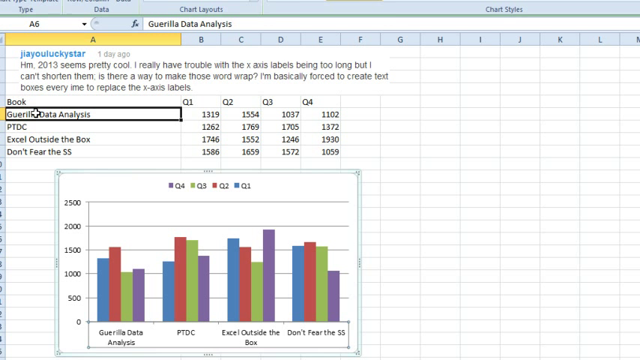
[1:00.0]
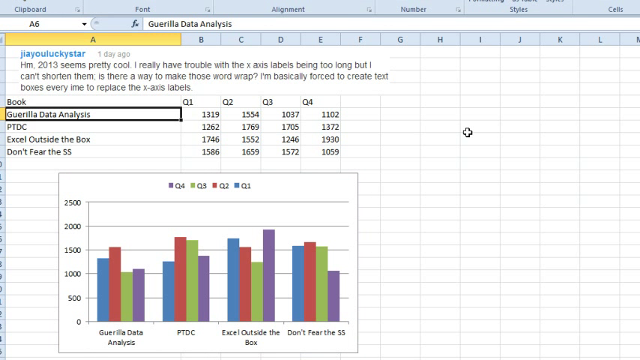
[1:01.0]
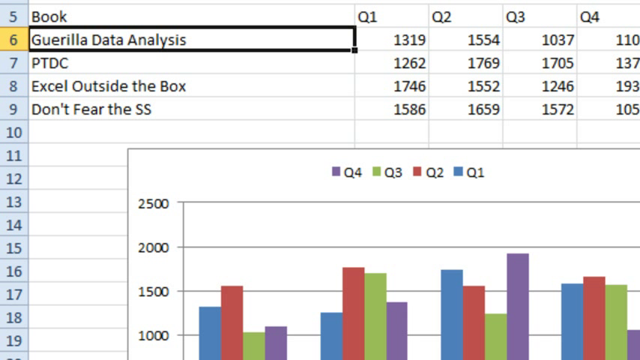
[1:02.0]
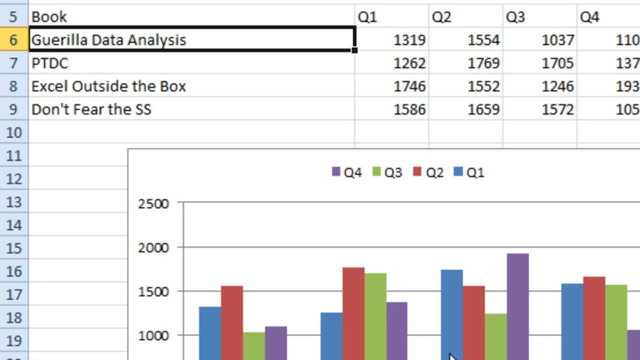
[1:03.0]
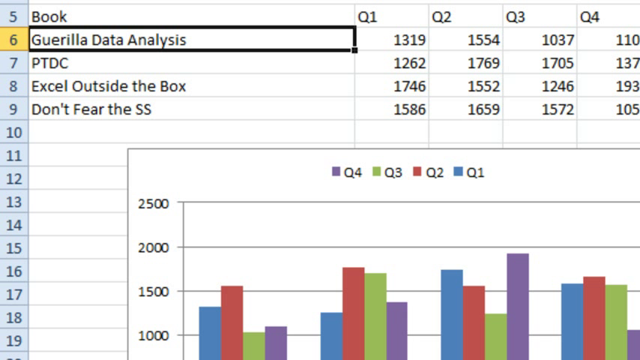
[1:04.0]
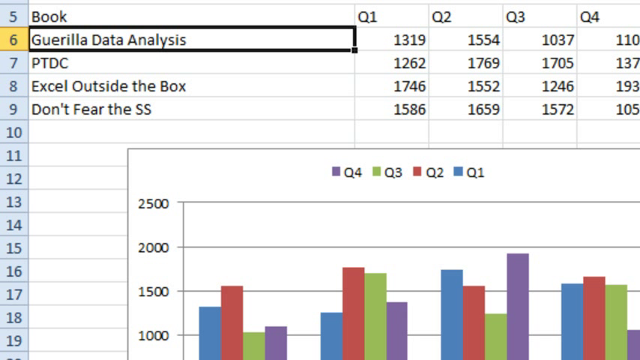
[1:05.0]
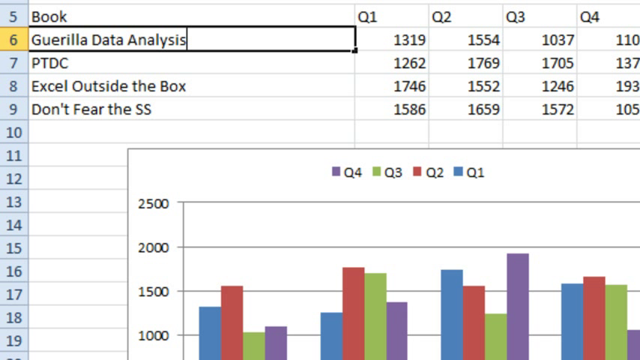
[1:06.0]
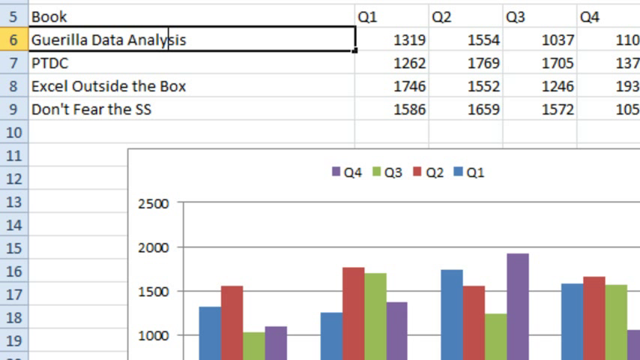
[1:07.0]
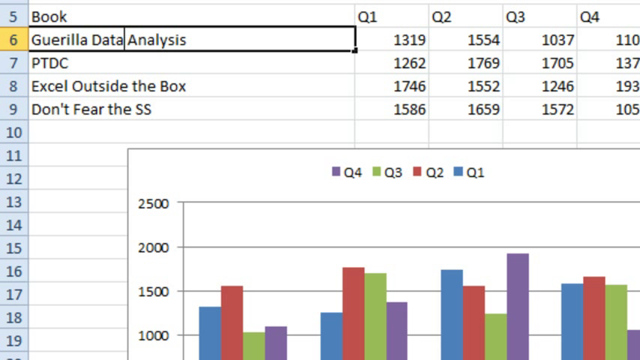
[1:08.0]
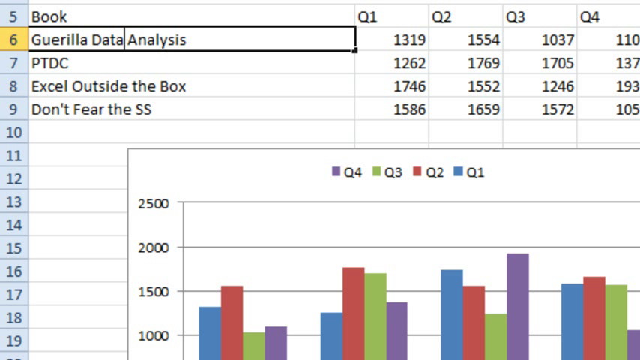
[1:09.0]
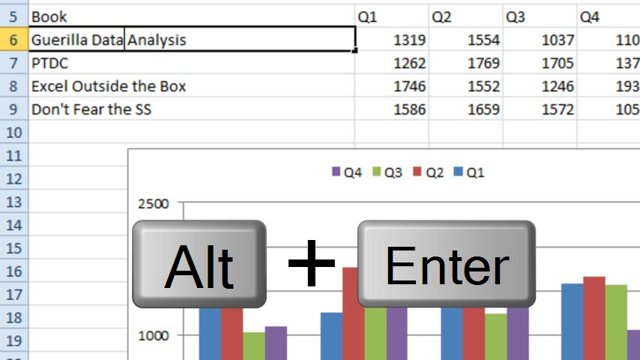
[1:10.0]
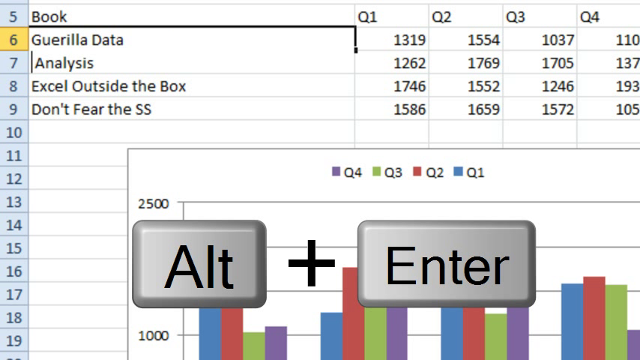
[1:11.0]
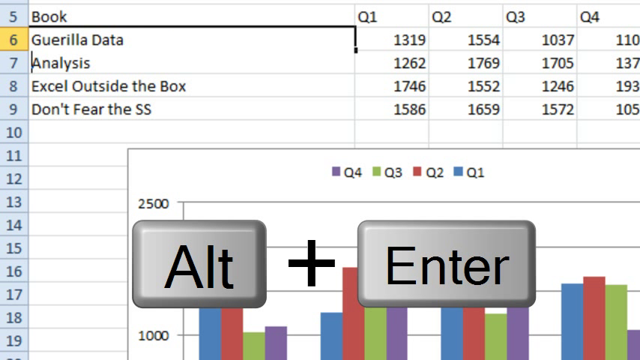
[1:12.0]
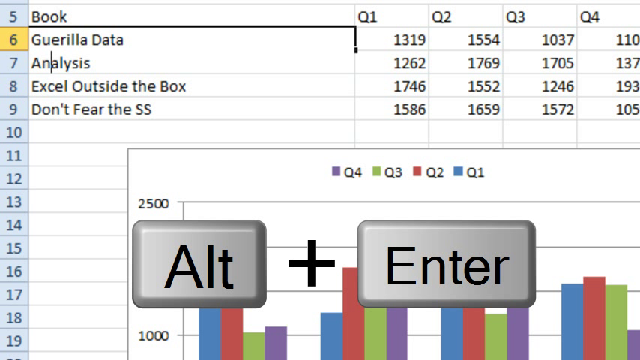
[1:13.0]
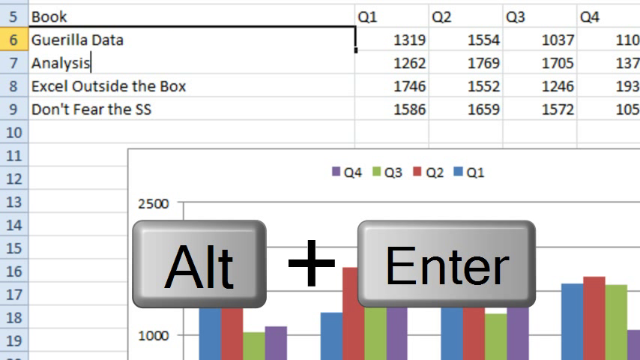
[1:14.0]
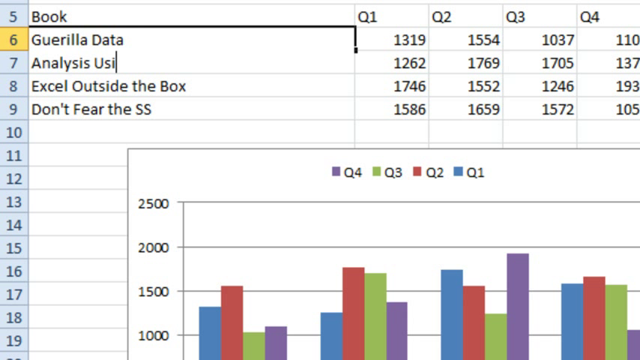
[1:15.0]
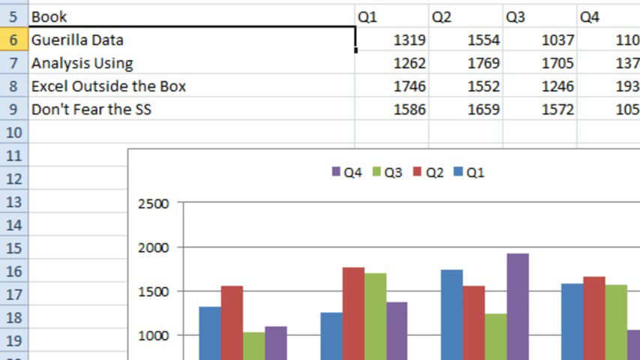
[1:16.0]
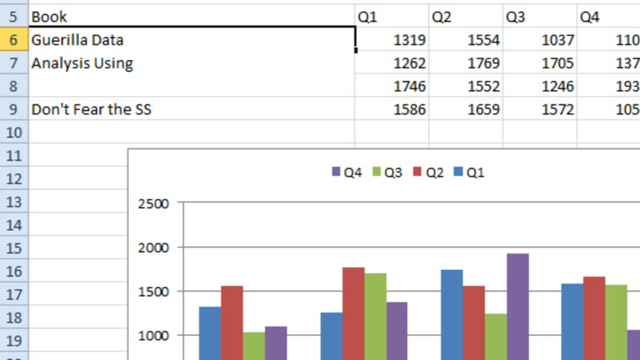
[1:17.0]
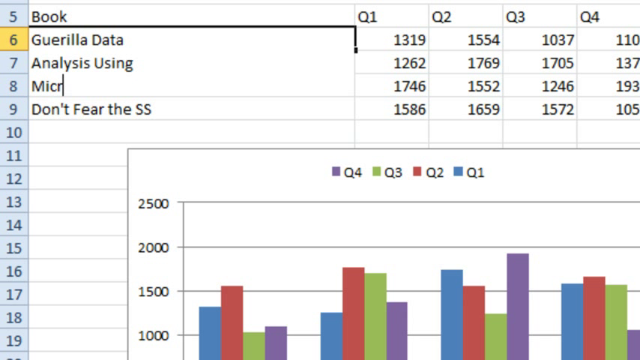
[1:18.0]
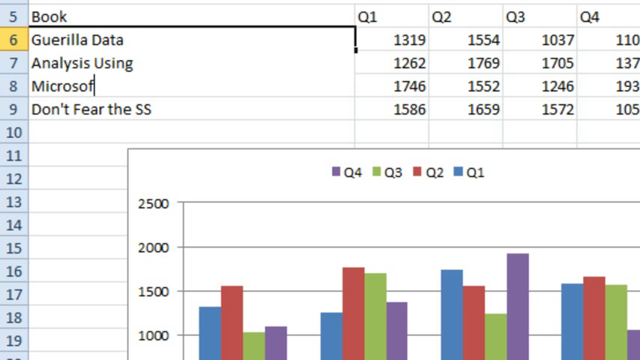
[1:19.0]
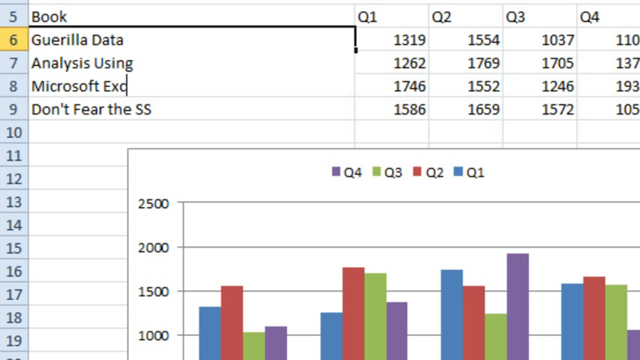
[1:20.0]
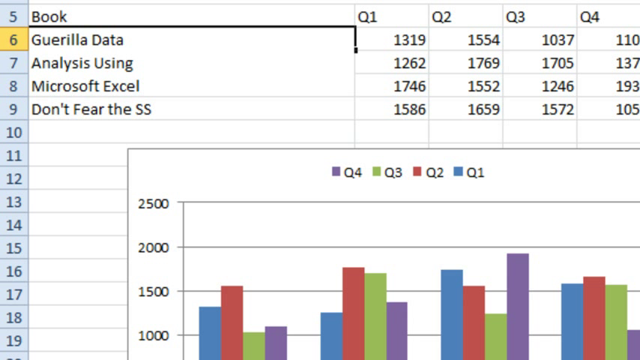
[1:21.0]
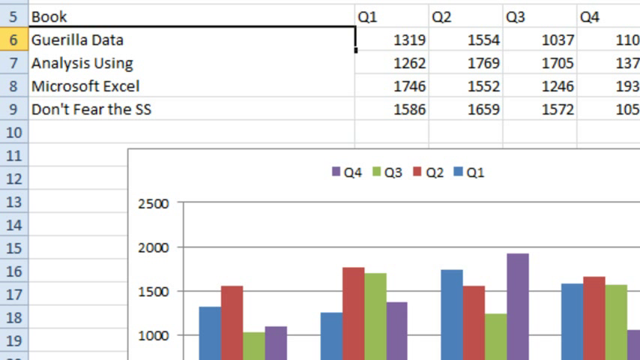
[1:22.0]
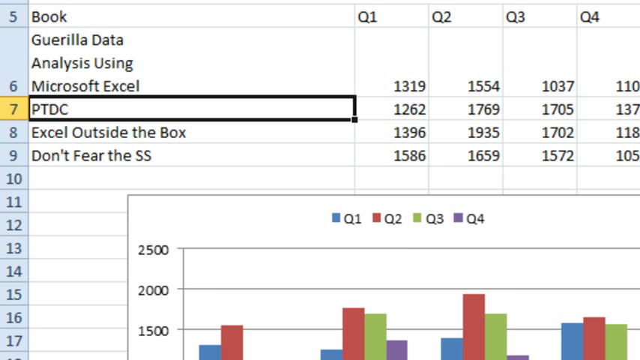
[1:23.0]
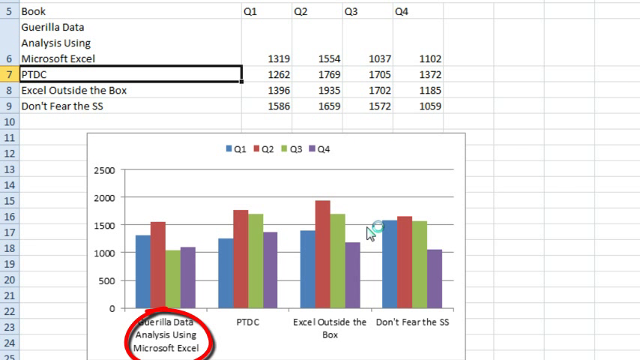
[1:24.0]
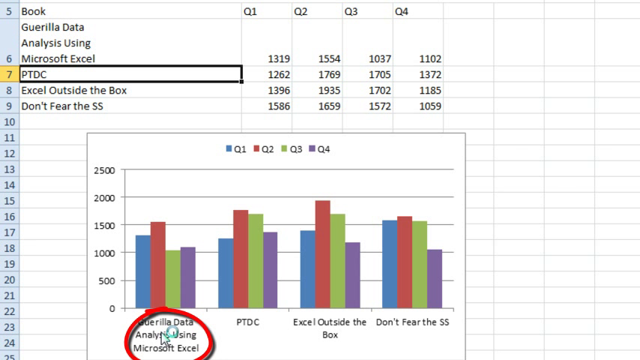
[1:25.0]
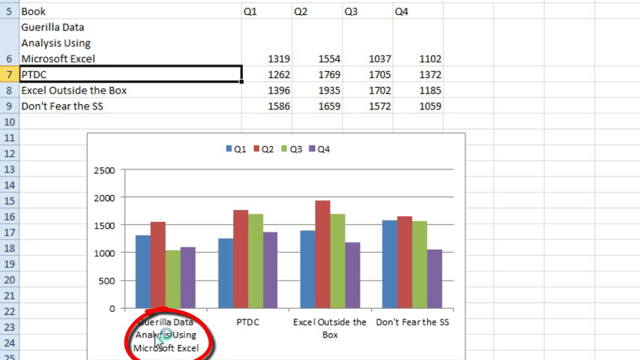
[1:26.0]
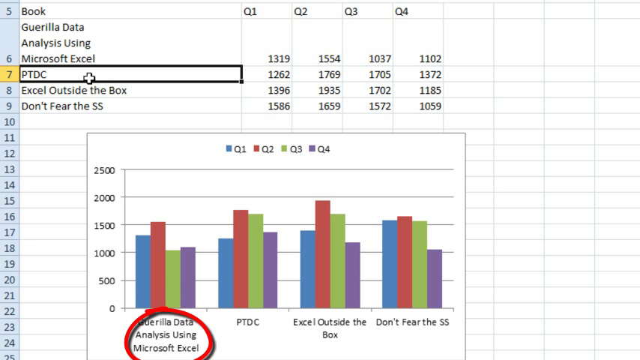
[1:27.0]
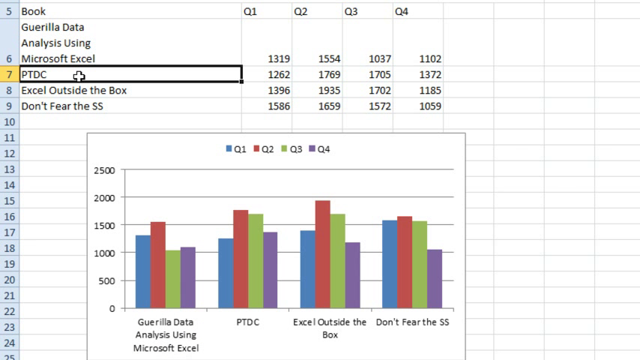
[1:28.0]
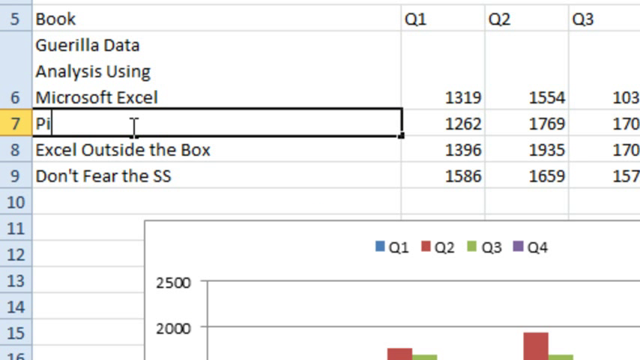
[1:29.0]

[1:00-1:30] Someone records their computer screen with Microsoft Excel open. At the top of the spreadsheet is a posted comment from "GAULUCKYSTAR". Columns A through E are in use, and a generated bar graph is at the bottom of the screen. The user clicks the second option under column A, which reads "Gorilla Data Analysis", highlighting the rectangle in black, and then the view zooms in further on column A. They double-click row 6 of column A, the highlighted box reading "Gorilla Data Analysis", enable the text entry tool and move left until the flashing text cursor is between "Data" and "Analysis". An image of the keyboard keys Alt and Enter appears, apparently indicating that they press Alt and Enter at the same time. This causes the first two words before "Analysis" to disappear. They move the cursor to the right and delete the space in front of "Analysis", then move the cursor to the right of "Analysis", press Enter and type "Using", then hit Enter again to start a new line in the same box and type "Microsoft Excel". The cell now reads "Gorilla Data", a line break, "analysis using", a line break, "Microsoft Excel".